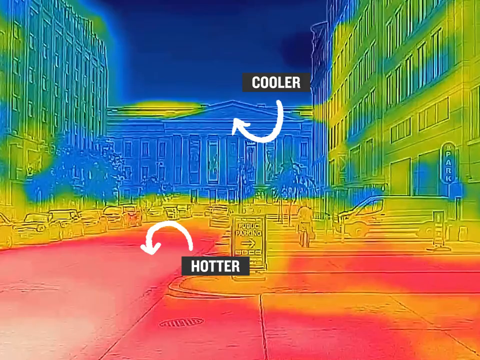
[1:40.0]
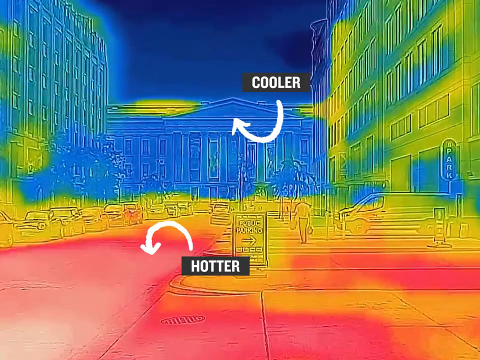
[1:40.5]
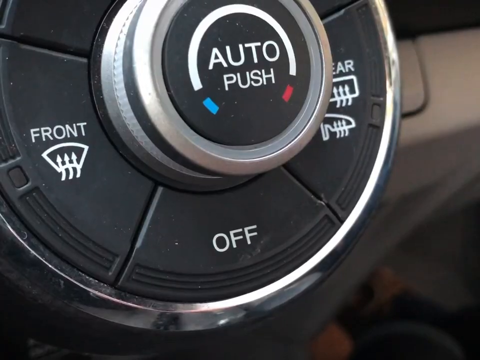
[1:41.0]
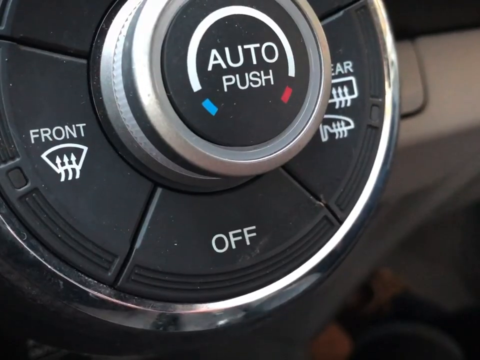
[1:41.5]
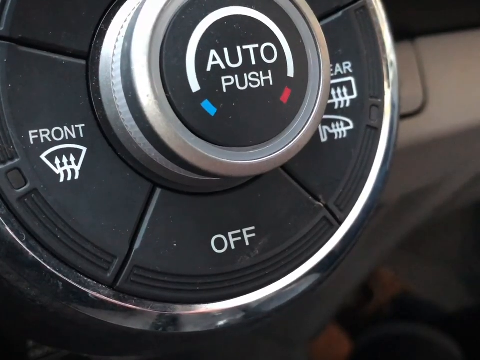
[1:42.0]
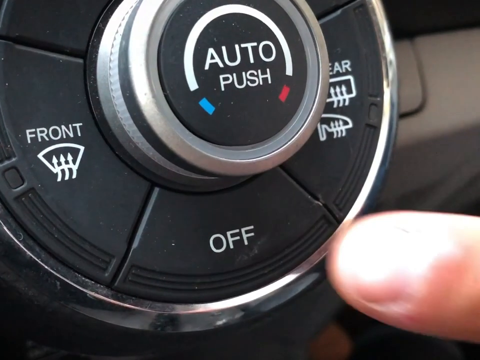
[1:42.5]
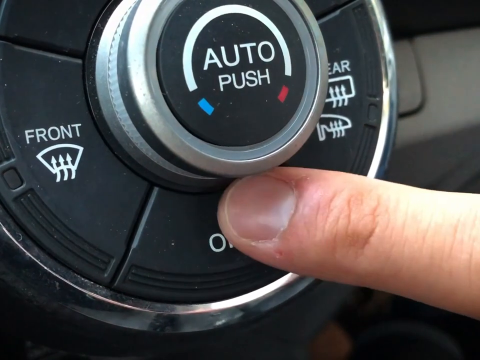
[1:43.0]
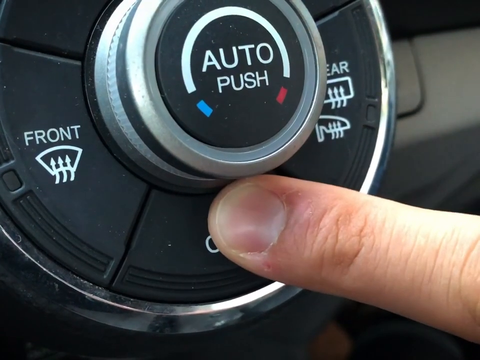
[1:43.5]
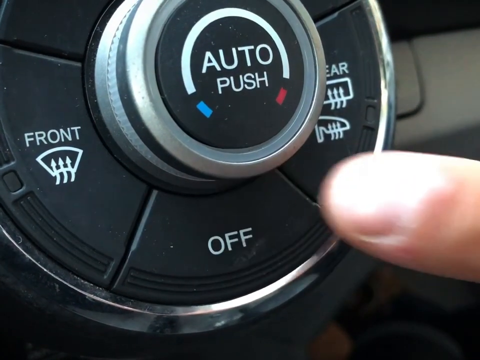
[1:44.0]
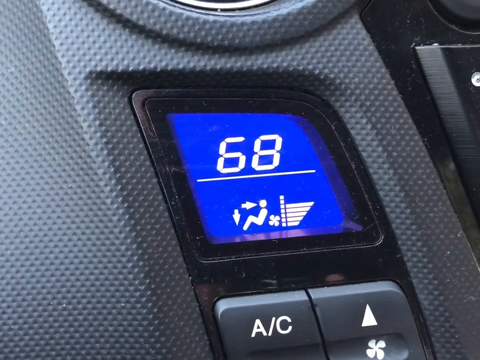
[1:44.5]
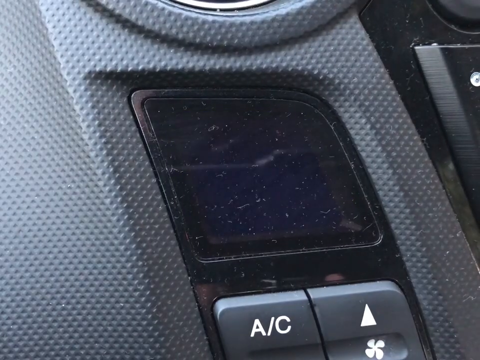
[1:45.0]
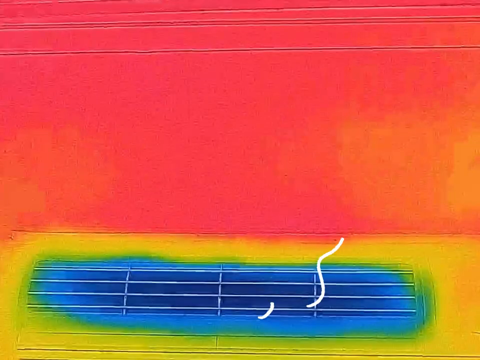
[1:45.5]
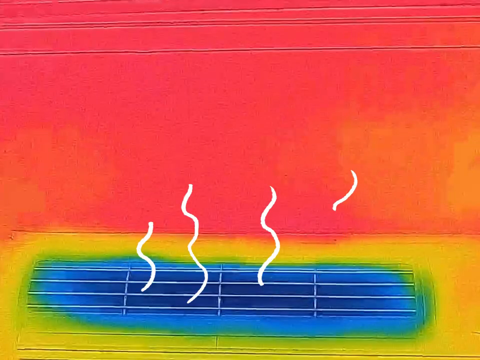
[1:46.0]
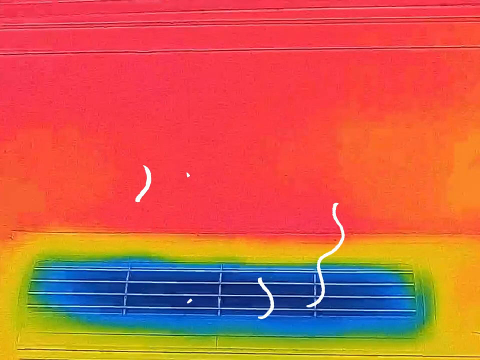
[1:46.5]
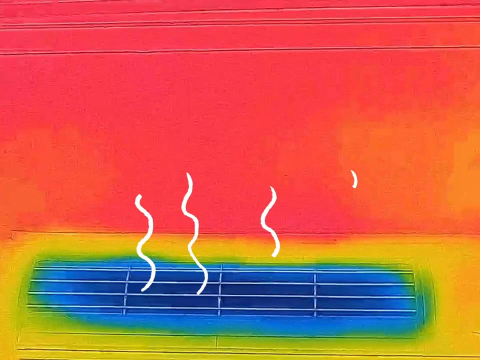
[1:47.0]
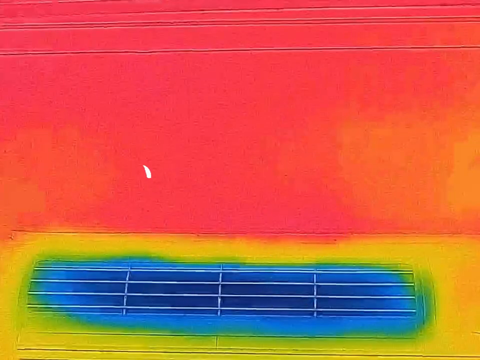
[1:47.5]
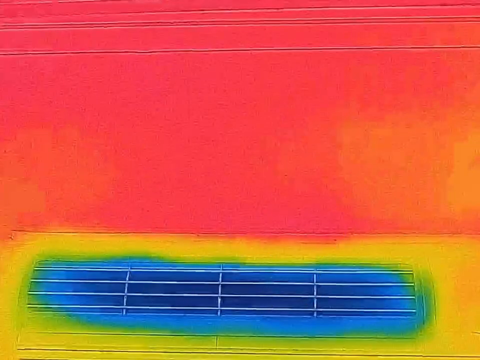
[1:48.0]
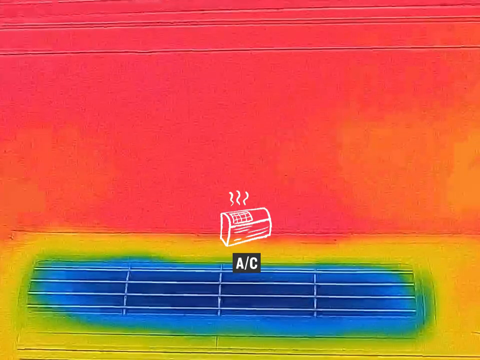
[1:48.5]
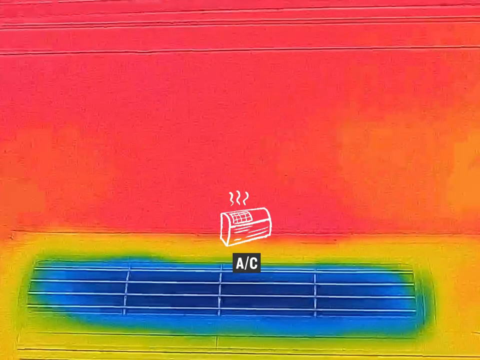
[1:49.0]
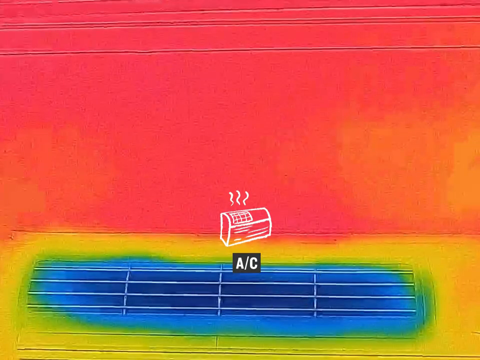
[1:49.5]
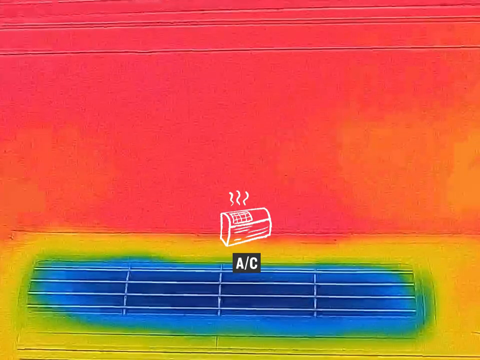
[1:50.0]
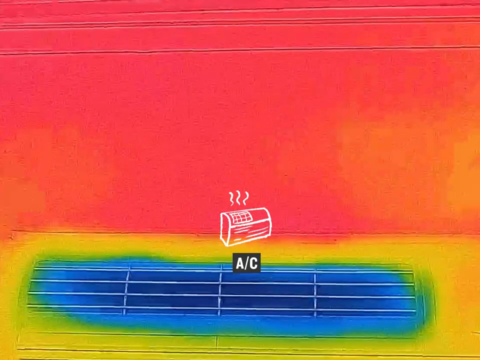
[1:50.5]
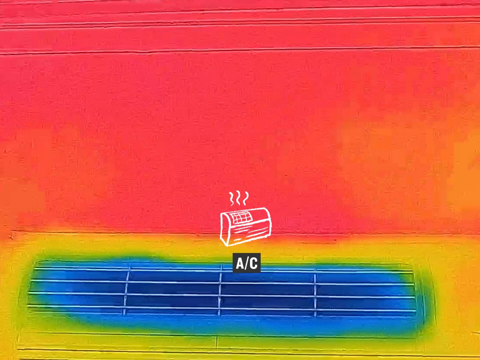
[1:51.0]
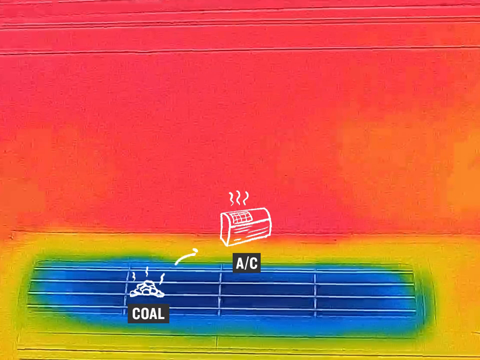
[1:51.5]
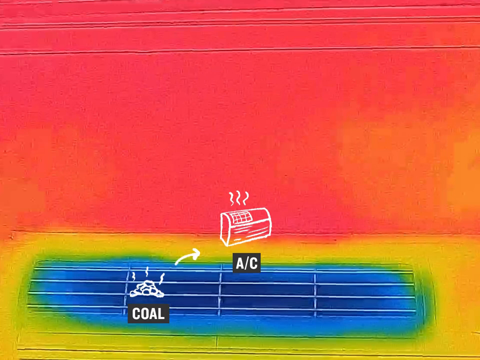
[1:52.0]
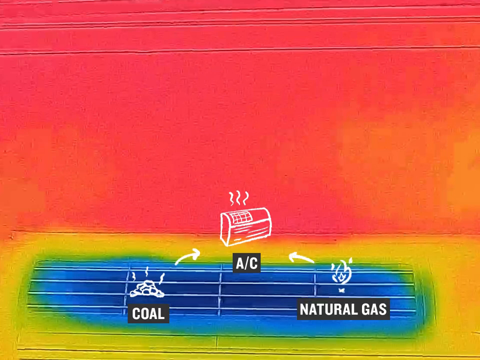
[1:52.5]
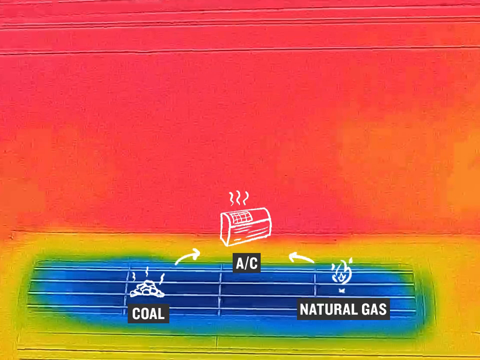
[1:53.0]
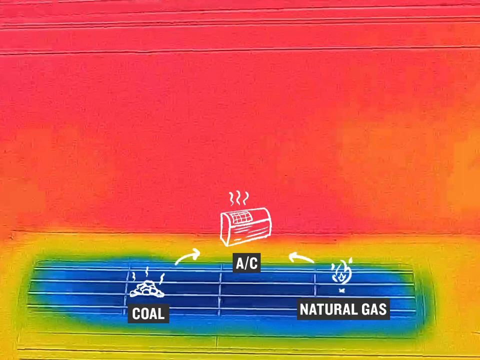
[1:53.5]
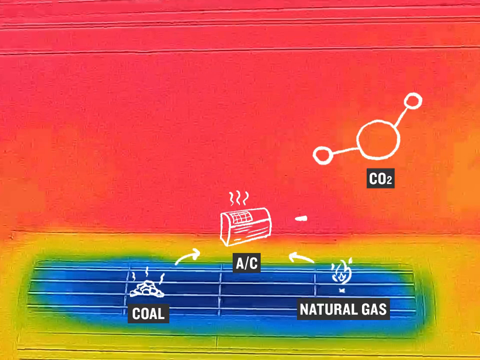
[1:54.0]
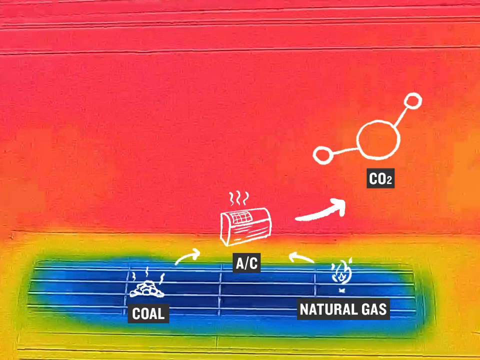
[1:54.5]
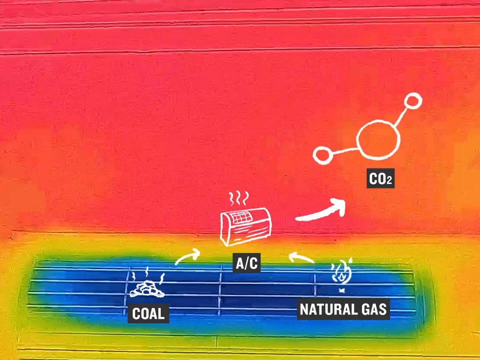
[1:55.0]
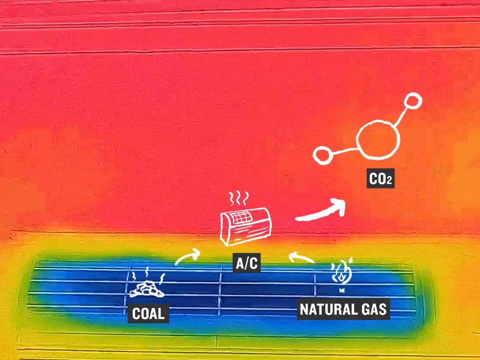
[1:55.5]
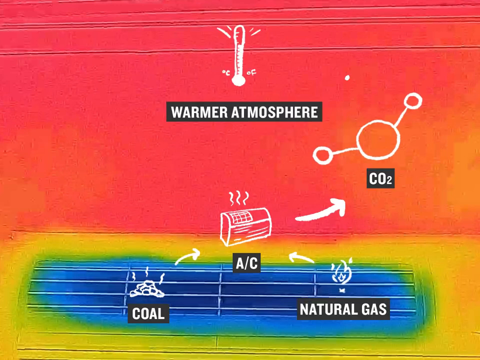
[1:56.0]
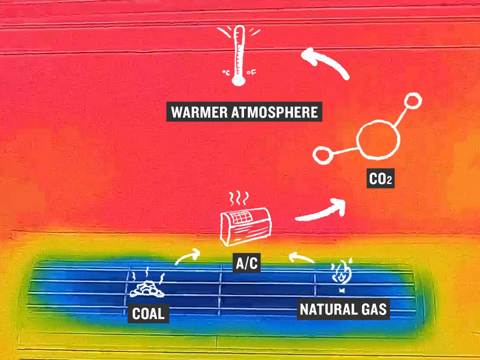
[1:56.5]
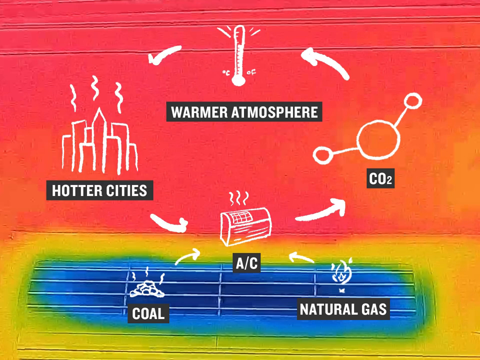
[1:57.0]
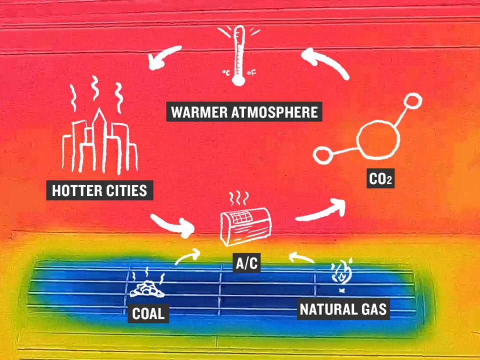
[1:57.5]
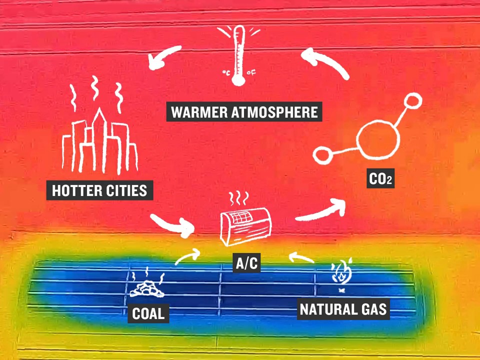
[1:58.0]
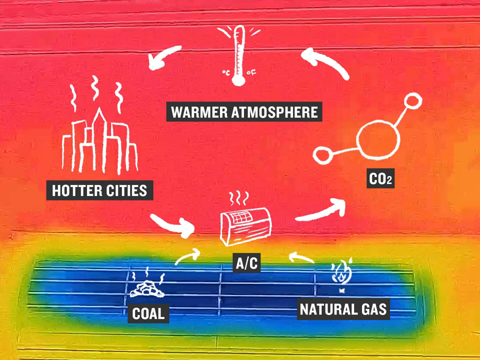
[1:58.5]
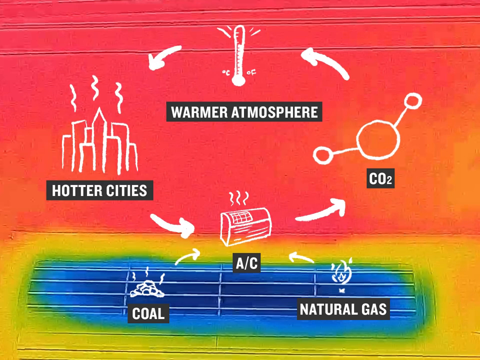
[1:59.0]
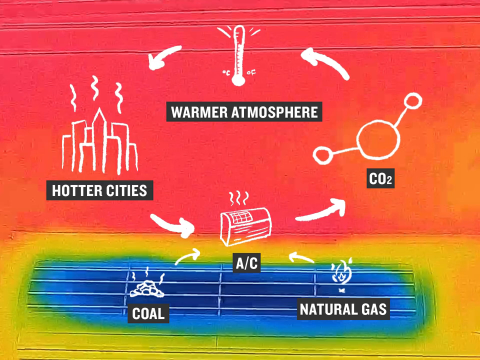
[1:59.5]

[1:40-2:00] The heat map view of the city street shows parked cars, buildings and the two arrows, one pointing to the asphalt saying "hotter" and the other pointing to the white building saying "cooler." The video changes to an air conditioning dial in a car, with an auto push option, an off option and two airflow options. Someone pushes the off button, and the AC display switches from 68 degrees to completely off. Next, an in-house air conditioning unit appears with the heat map effect and cool air waves drawn on top to show it producing cold air. Additional drawings appear over it: a coal icon, natural gas and CO2, with arrows indicating that CO2 leads to a warmer atmosphere and hotter cities, which in turn lead to more AC use, forming a cycle.